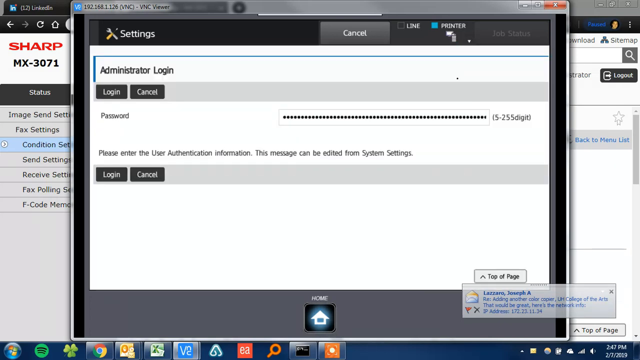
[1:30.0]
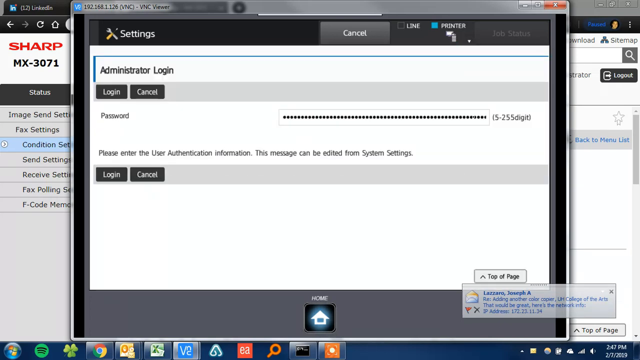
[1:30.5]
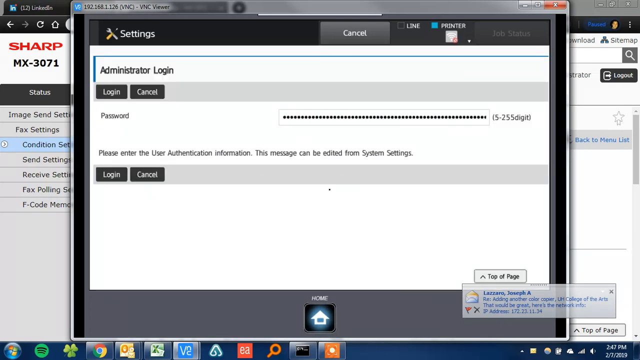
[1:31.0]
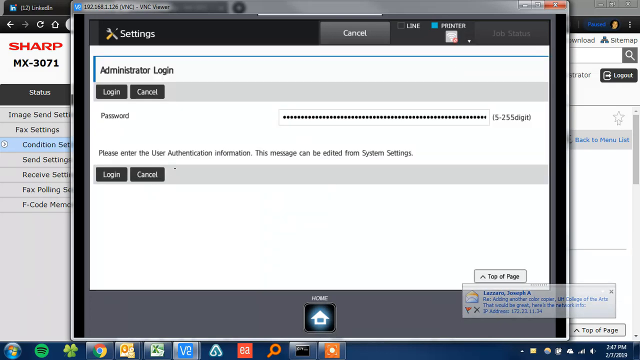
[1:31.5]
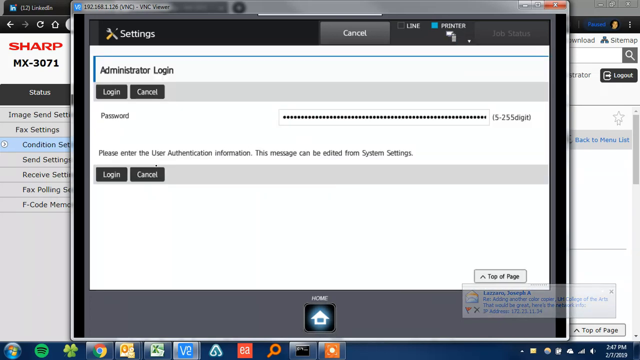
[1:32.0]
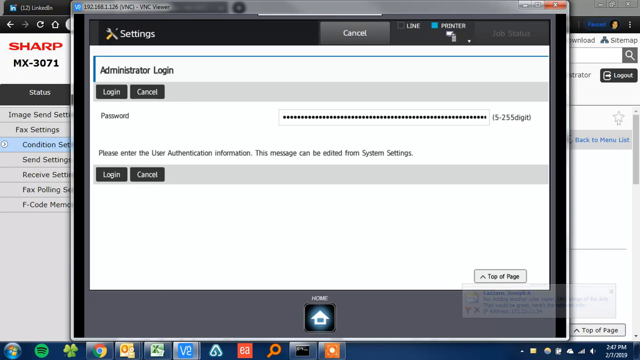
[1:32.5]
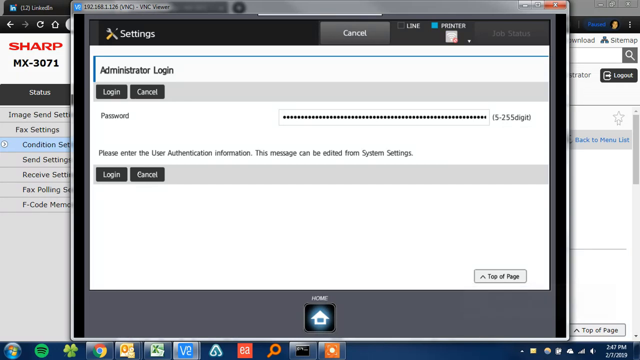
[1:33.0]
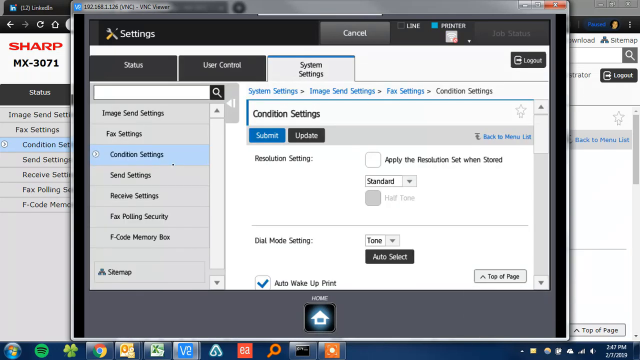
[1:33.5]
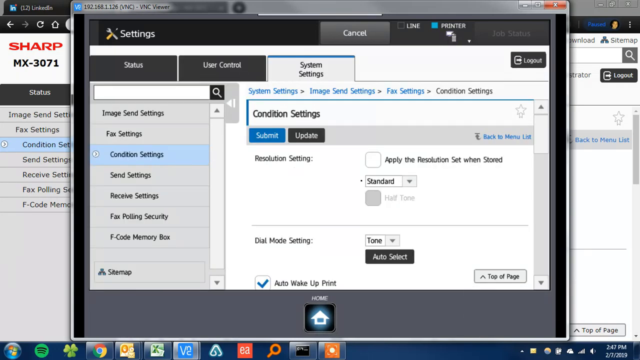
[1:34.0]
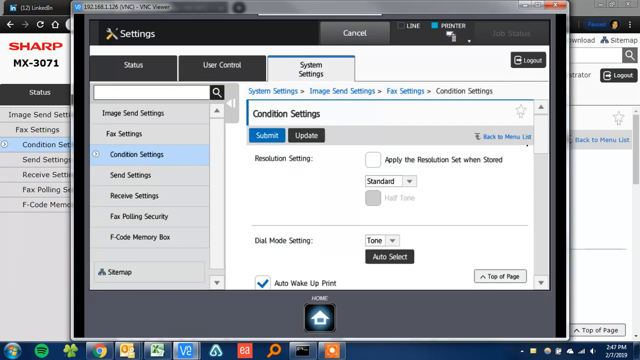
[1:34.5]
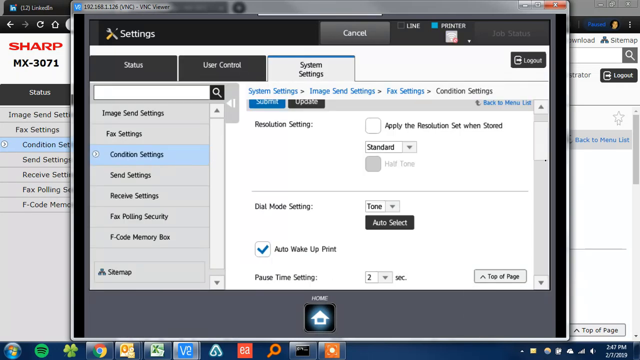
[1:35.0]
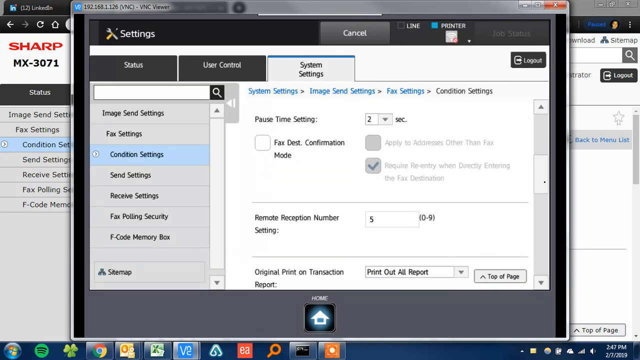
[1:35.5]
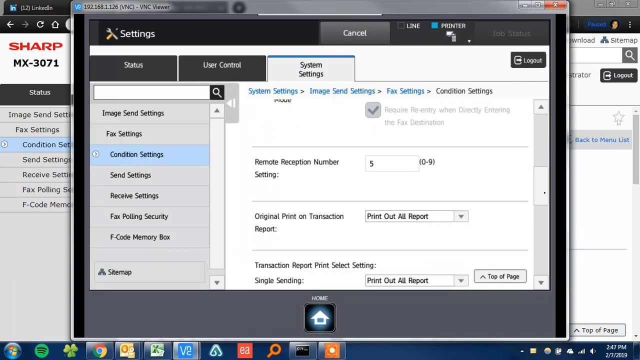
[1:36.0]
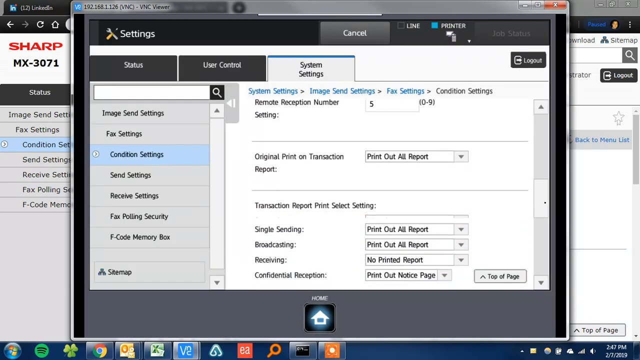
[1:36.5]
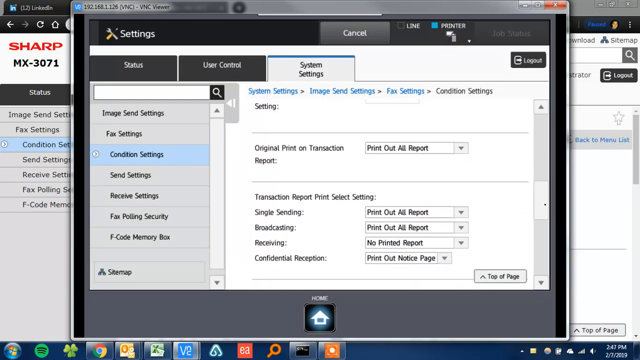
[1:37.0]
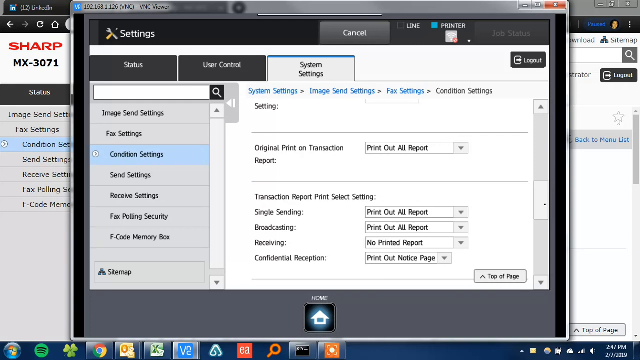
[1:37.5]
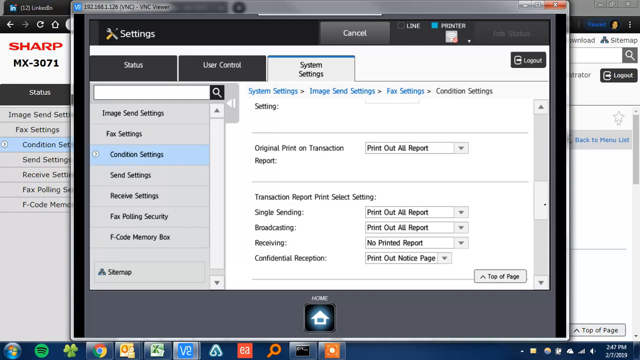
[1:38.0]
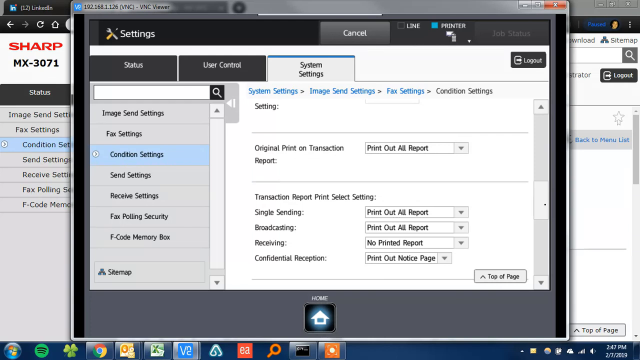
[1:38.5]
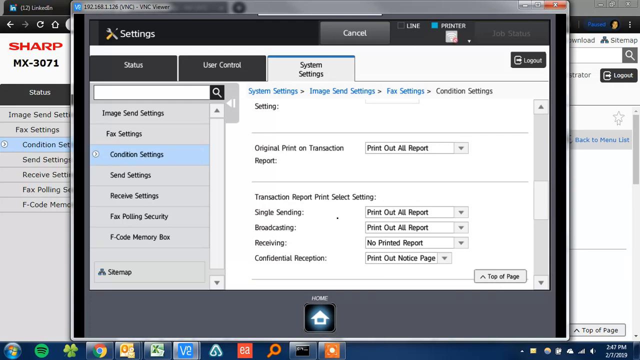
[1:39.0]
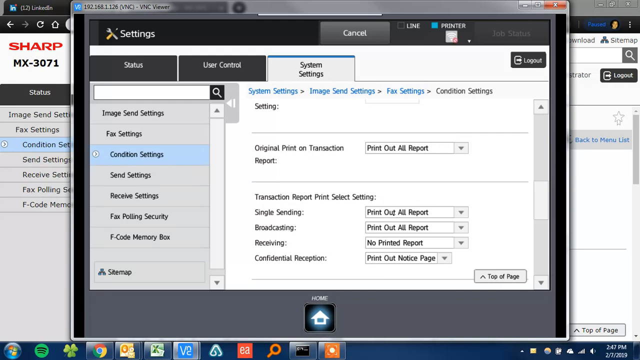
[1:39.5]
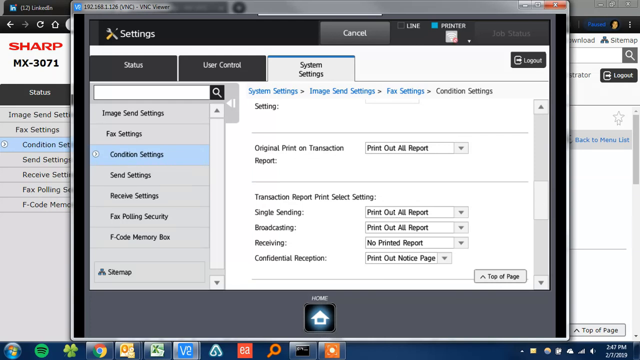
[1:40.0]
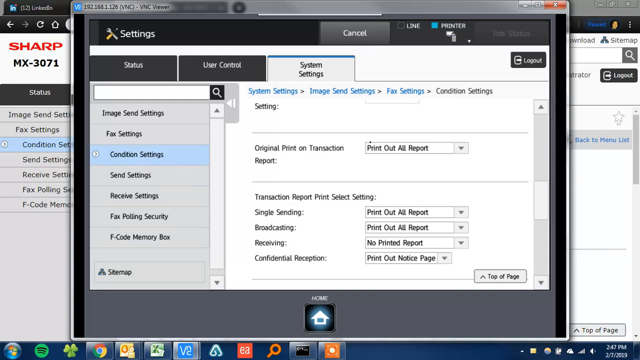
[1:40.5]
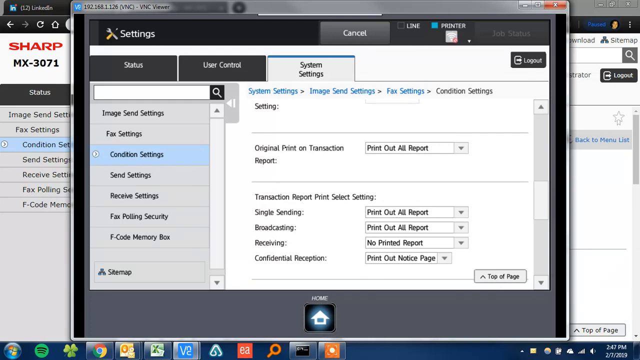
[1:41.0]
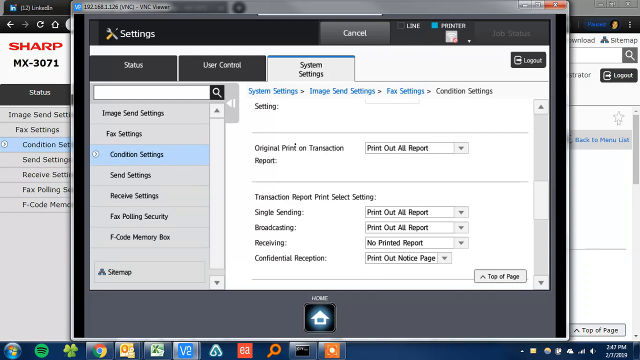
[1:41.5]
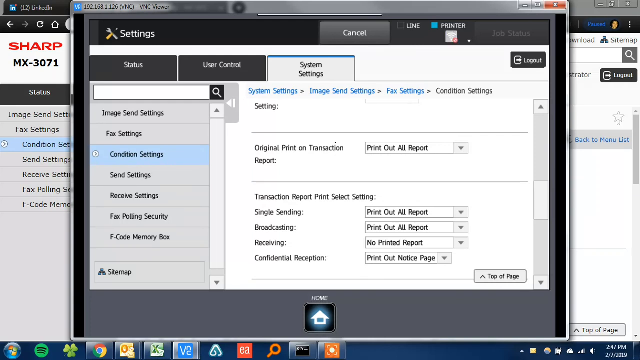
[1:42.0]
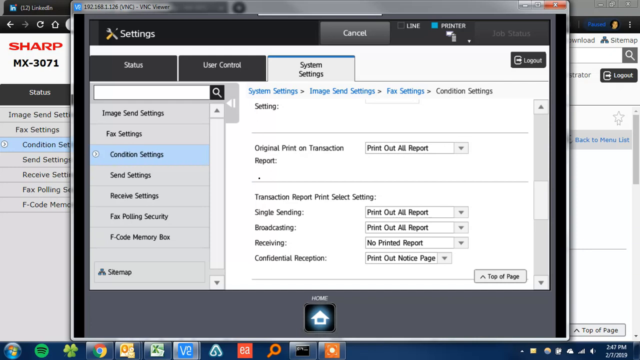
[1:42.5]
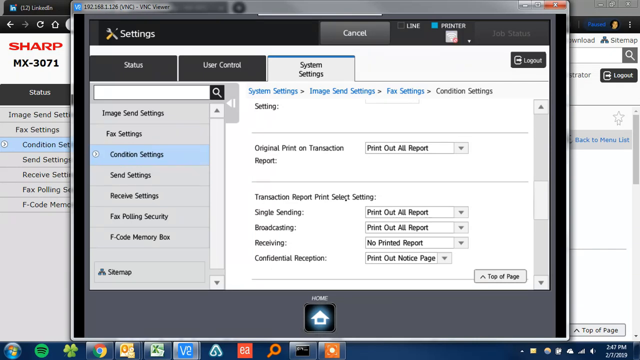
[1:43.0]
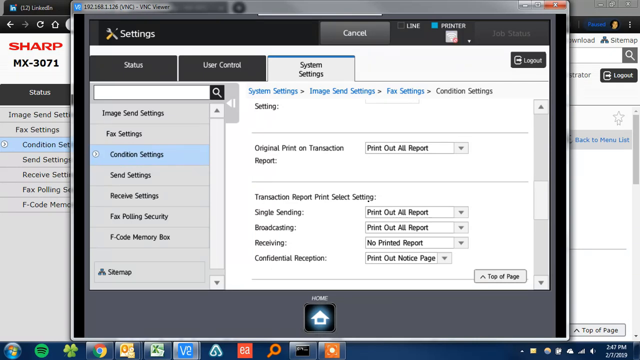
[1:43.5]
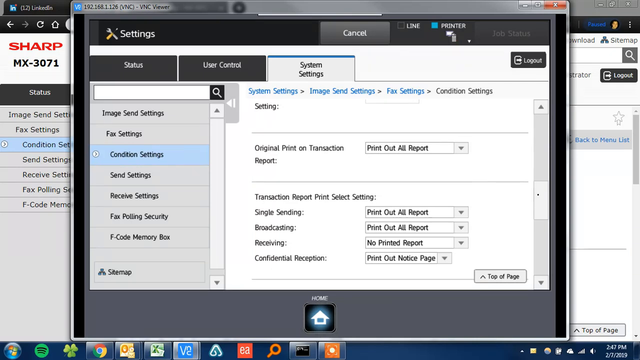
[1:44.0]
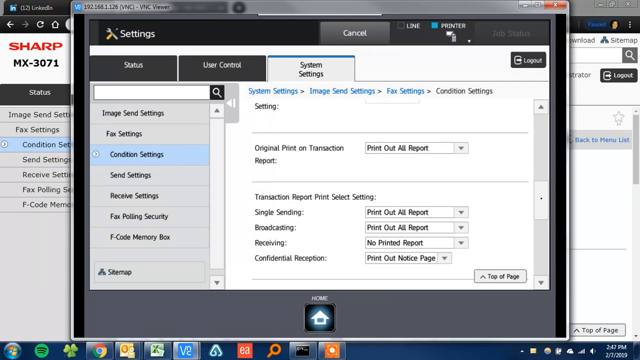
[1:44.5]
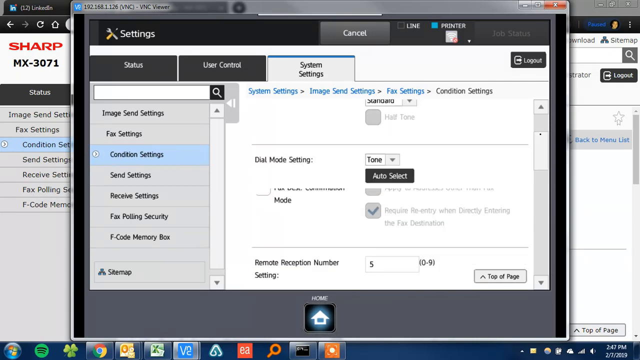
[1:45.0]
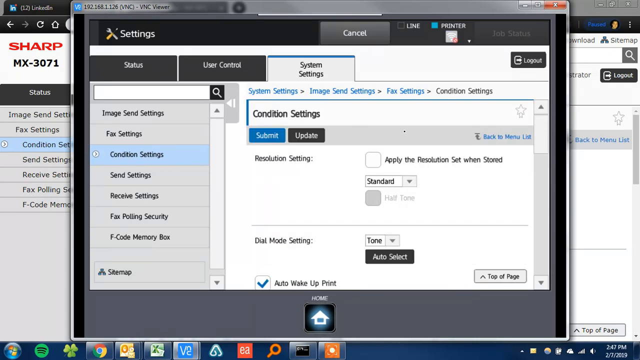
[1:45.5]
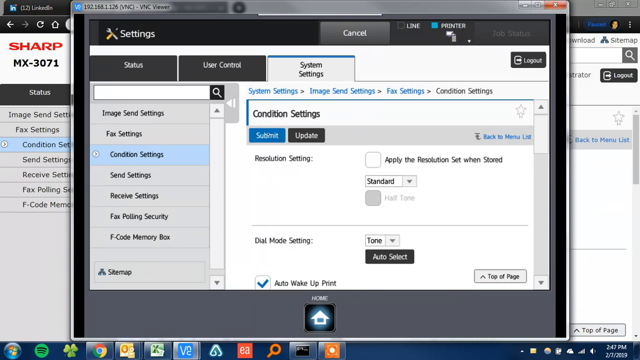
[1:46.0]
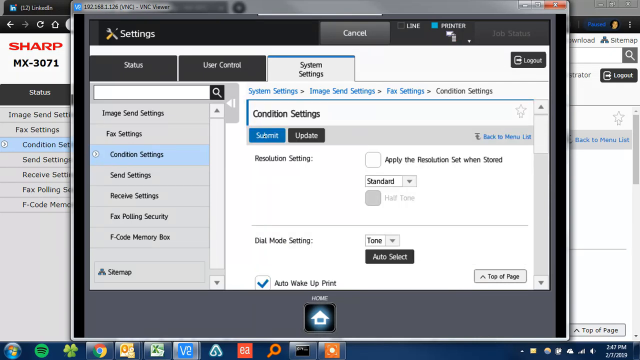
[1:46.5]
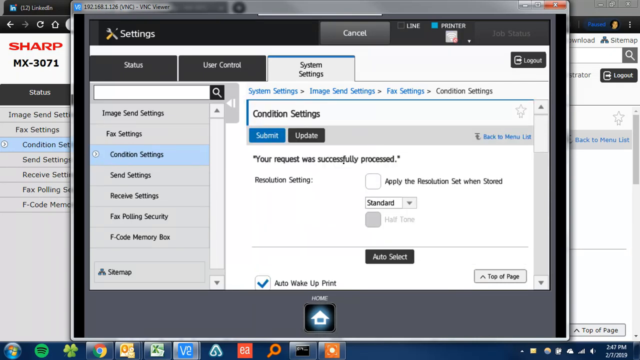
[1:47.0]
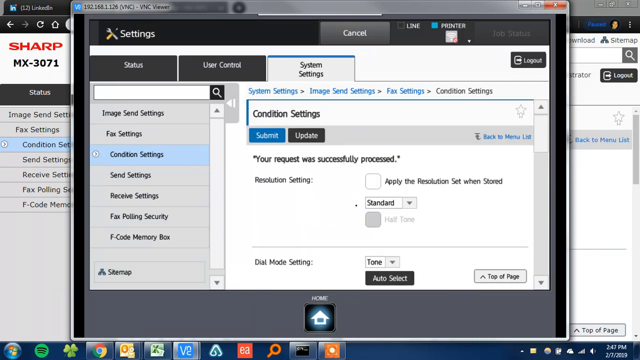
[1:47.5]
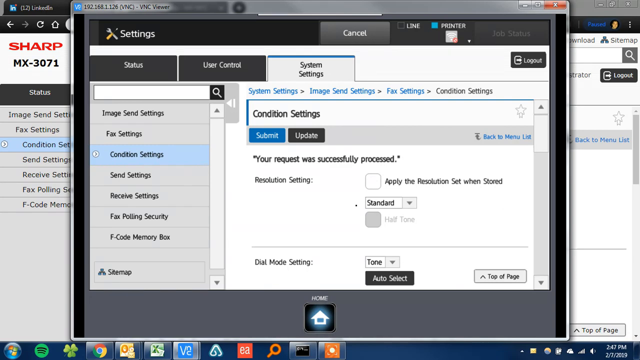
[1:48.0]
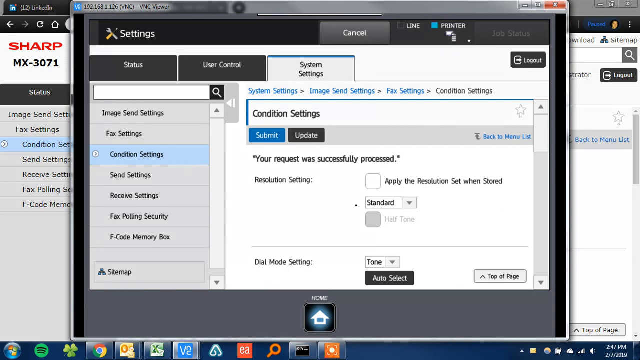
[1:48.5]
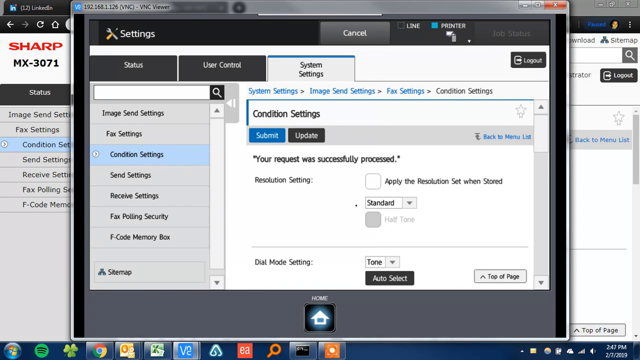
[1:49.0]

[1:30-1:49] In the settings, the user has just entered what looks like a very long password that takes up the whole administrator login bar. Still under image send settings, they are now in condition settings and scroll down. The pointer is a small black dot, which makes it hard to follow. They highlight original print on transaction report and transaction report print settings, and then appear to scroll back to the top, where it says "your request was successfully processed". At the top of the system settings is "resolution setting", with an unchecked checkbox for "apply the resolution set when stored" and a drop-down menu with standard selected. The next line, "dial mode setting", has a drop-down menu with tone selected and an auto select button. There is also a small button that returns to the top of the page when scrolling down.